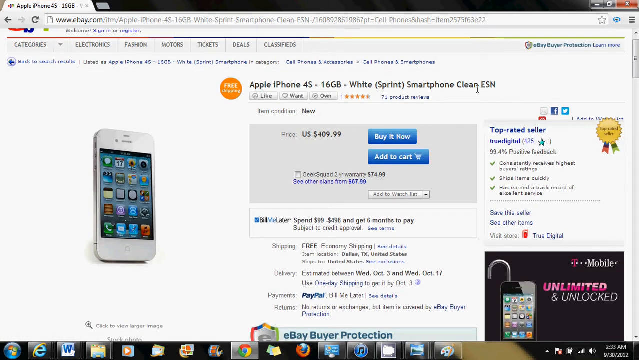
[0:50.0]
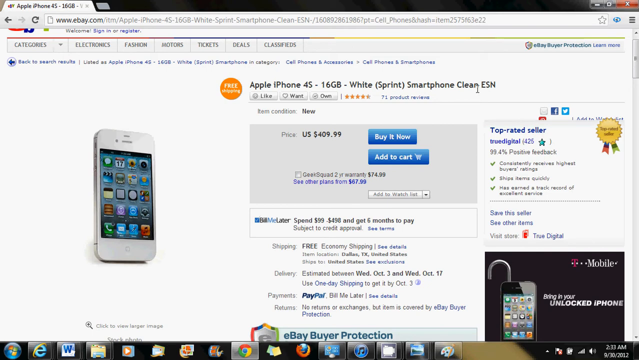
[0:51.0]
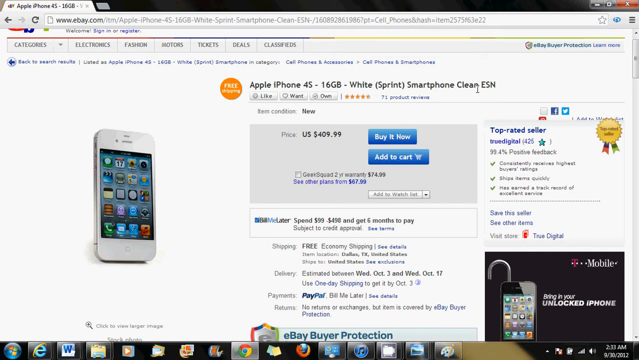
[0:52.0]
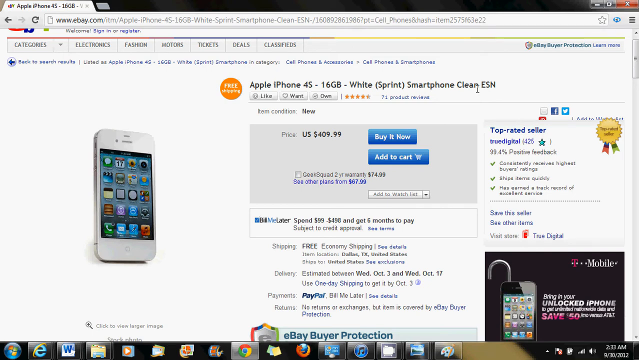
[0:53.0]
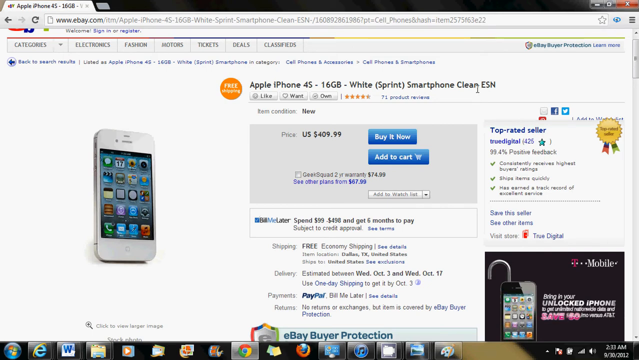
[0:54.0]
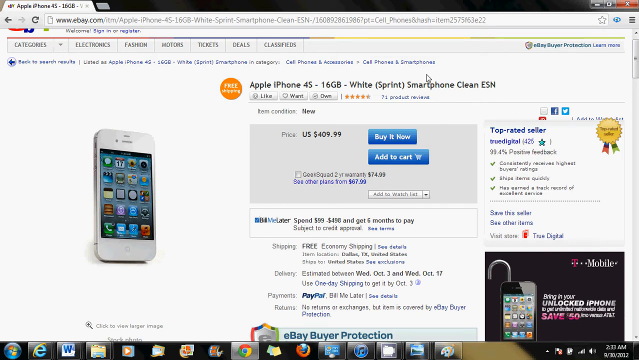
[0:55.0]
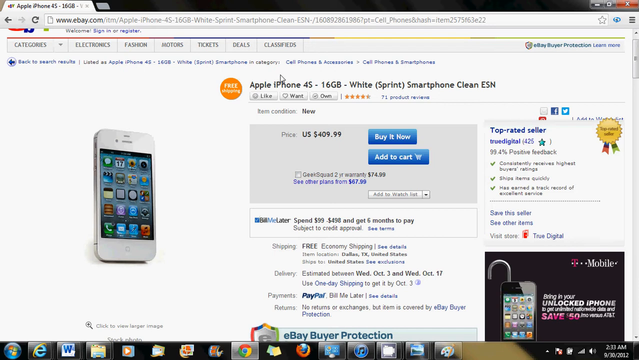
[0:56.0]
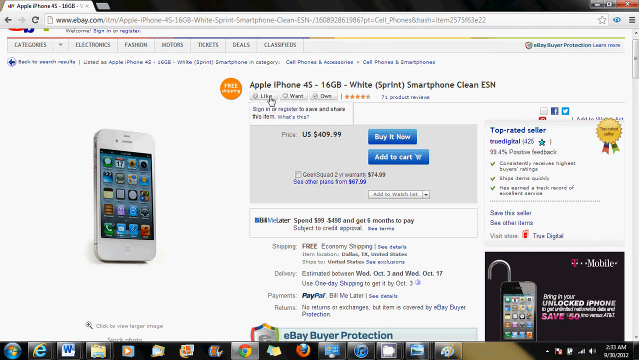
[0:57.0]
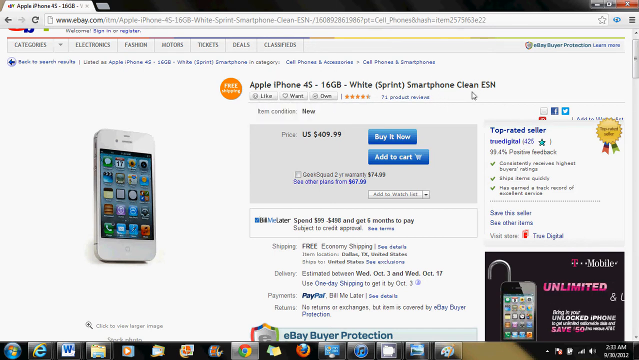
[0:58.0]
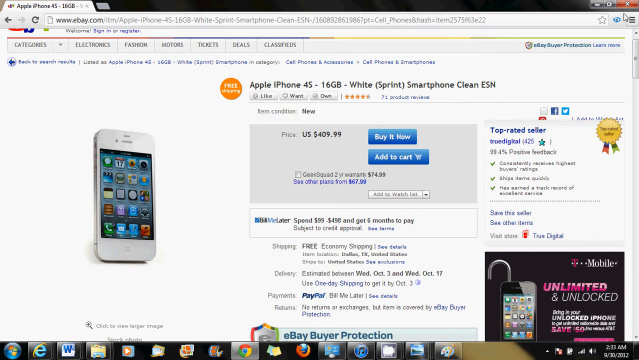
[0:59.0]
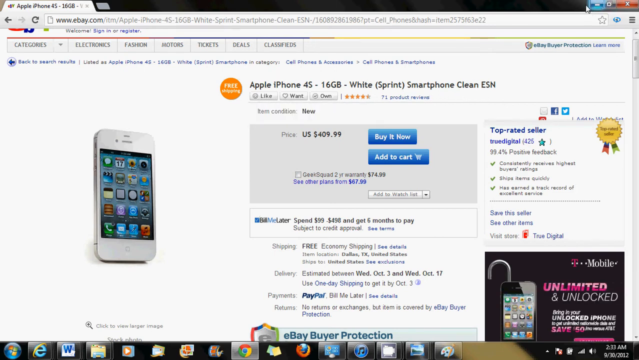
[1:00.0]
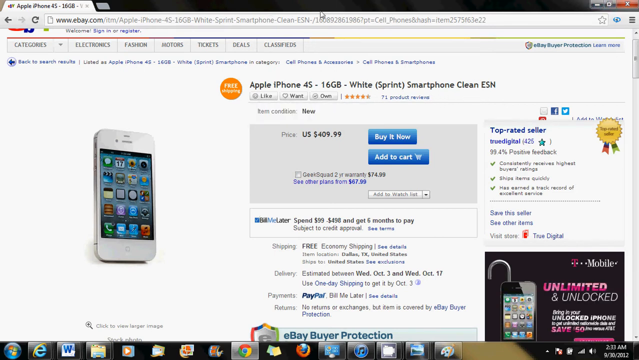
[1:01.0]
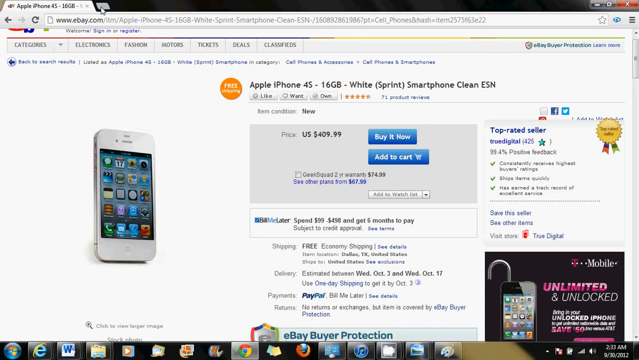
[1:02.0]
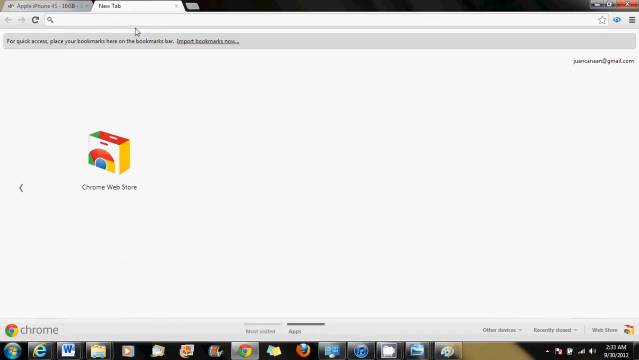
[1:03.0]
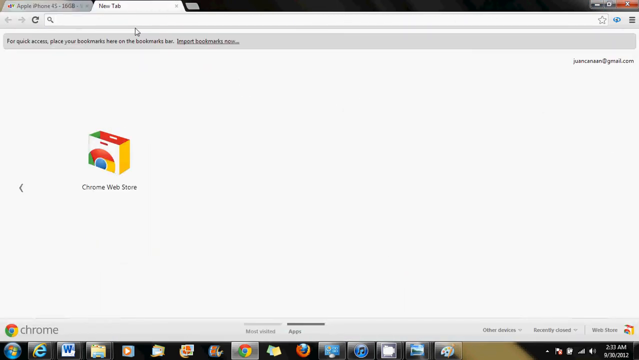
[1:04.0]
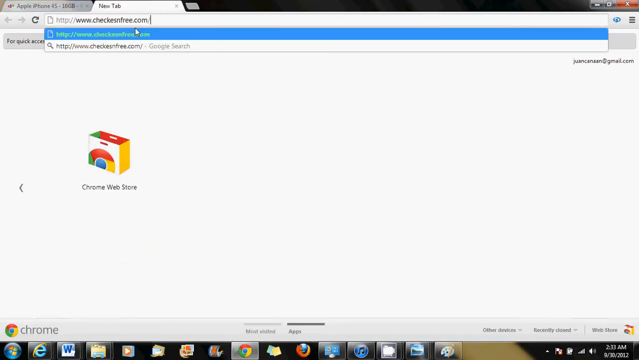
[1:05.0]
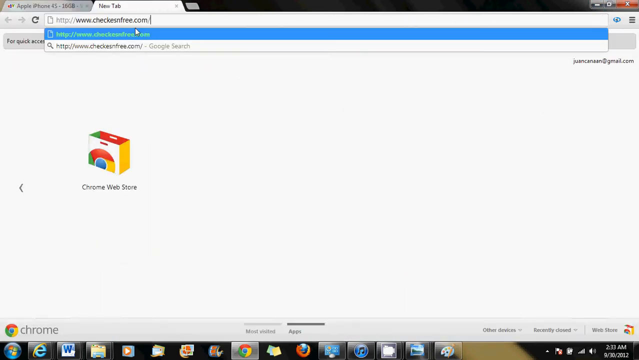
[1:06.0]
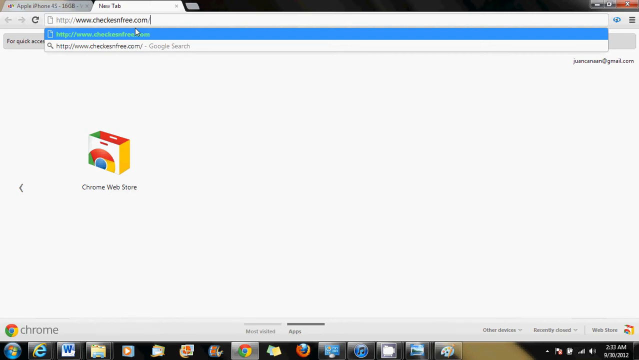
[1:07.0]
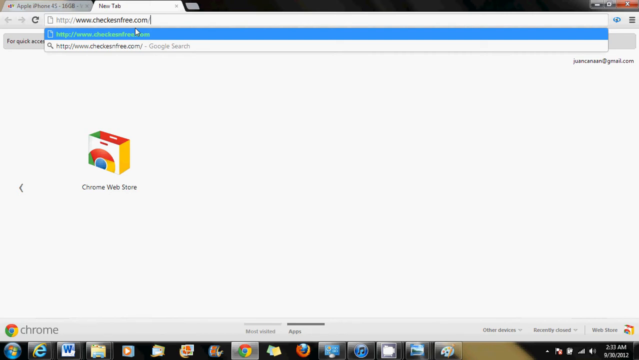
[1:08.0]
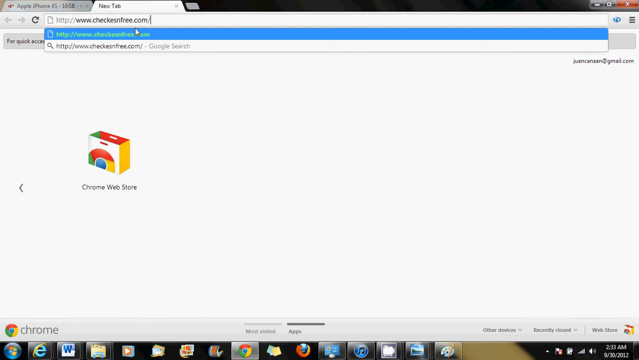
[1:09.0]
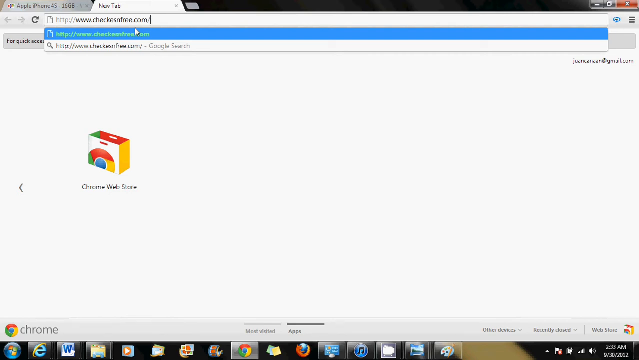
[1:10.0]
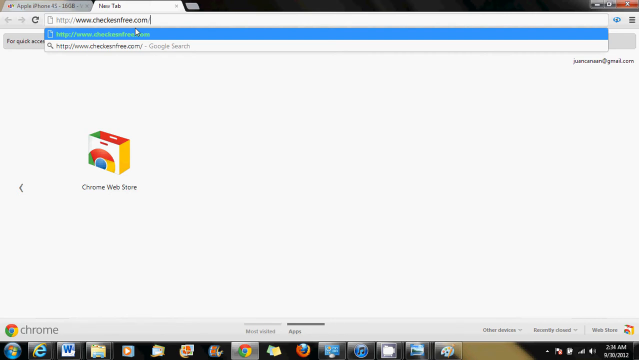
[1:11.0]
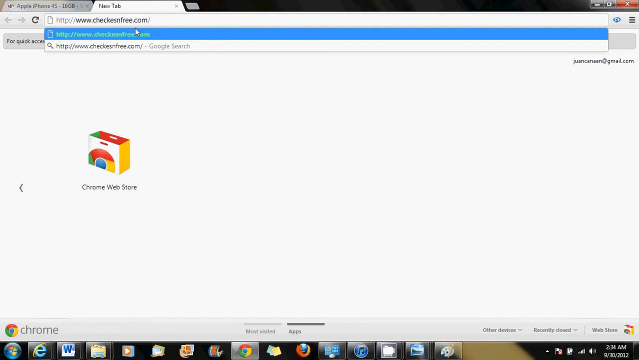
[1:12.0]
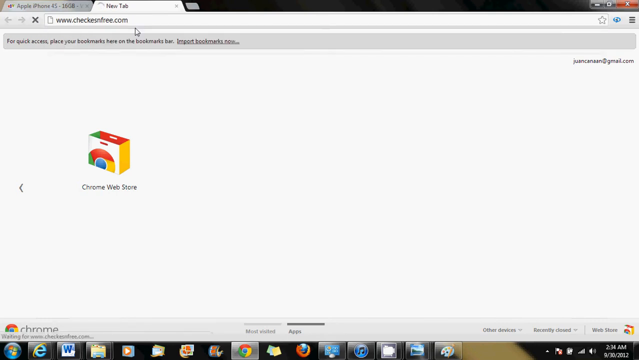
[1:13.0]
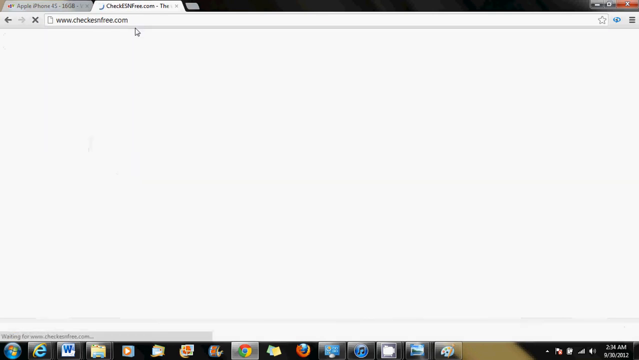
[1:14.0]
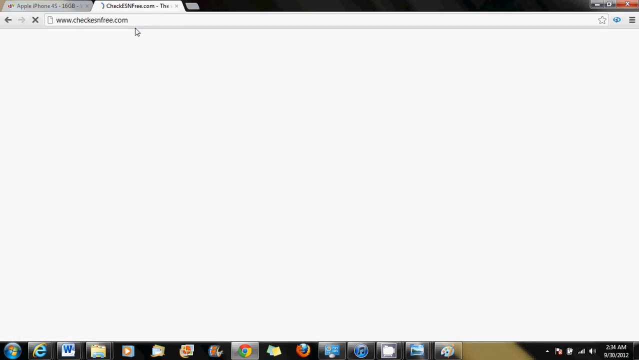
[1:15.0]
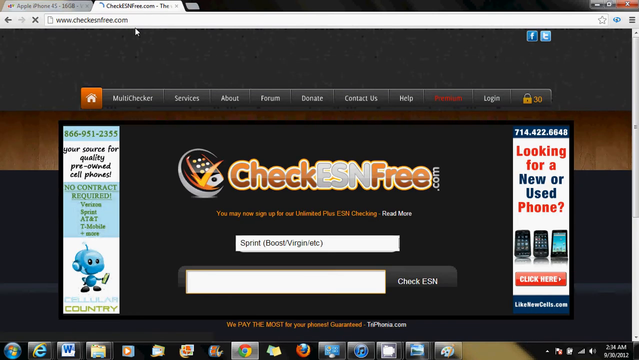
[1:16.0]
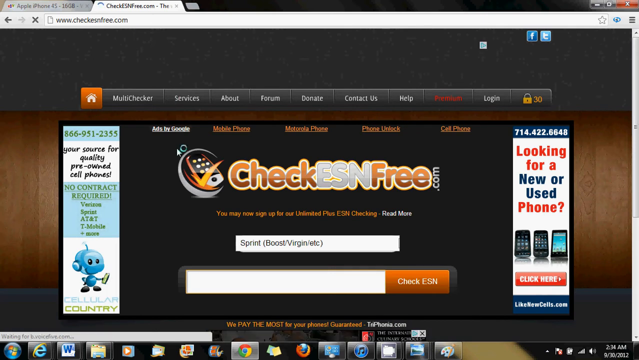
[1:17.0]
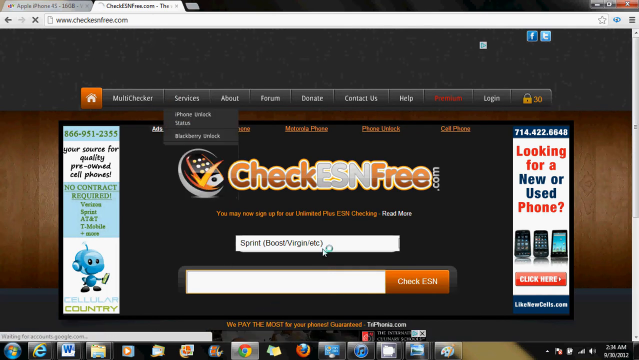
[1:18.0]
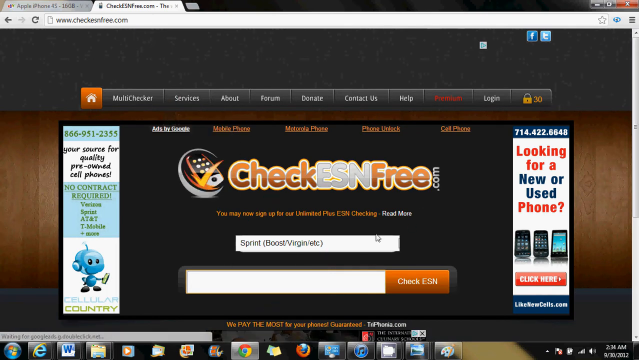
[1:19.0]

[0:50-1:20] The person is still looking through the listing for the white Sprint smartphone with a clean ESN. They open a new tab from the top left corner in Google Chrome, enter "checkesnfree.com," and press enter. The page has a black background with a navigation bar at the top and a black and orange theme. The left side reads "checkesnfree.com," and on the right side are large vertical advertisements; the one on the right begins "looking for a new or used."